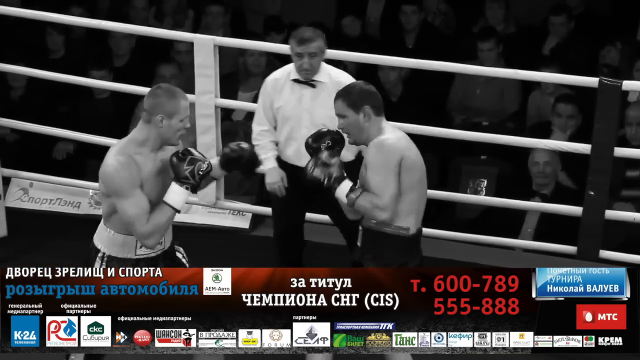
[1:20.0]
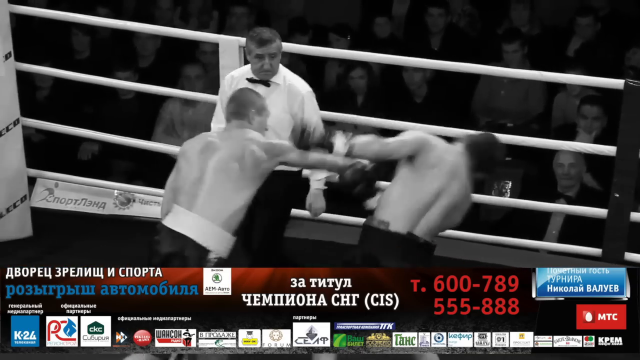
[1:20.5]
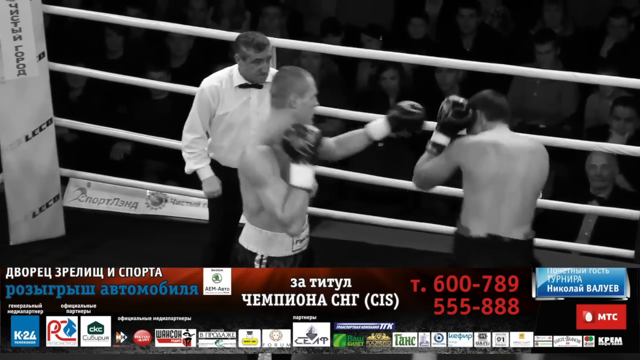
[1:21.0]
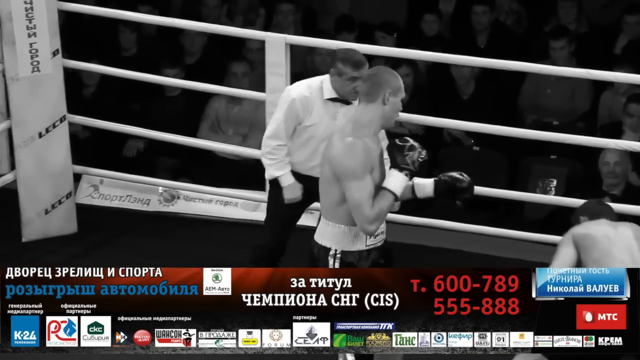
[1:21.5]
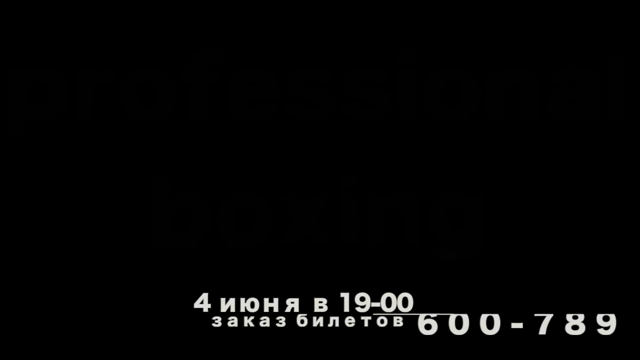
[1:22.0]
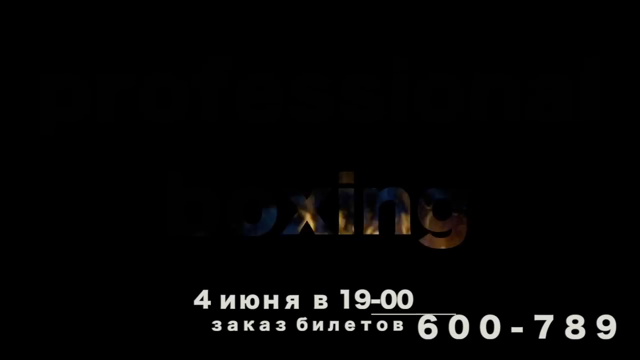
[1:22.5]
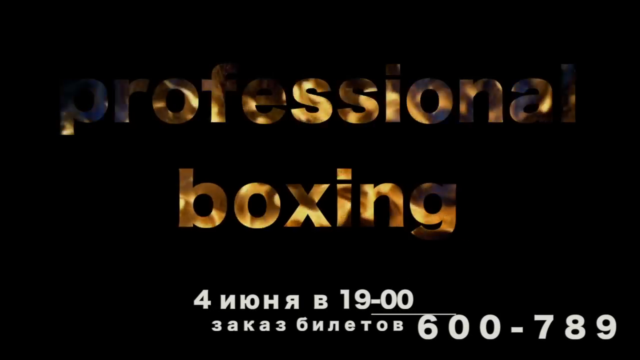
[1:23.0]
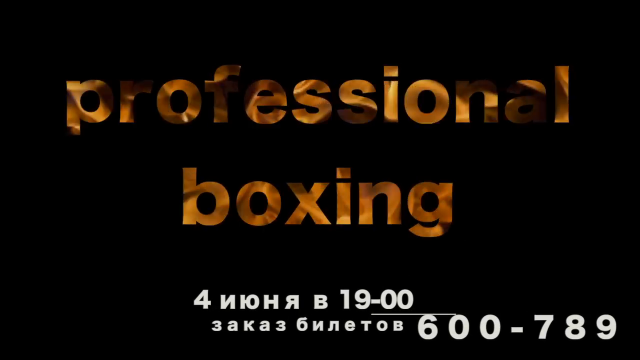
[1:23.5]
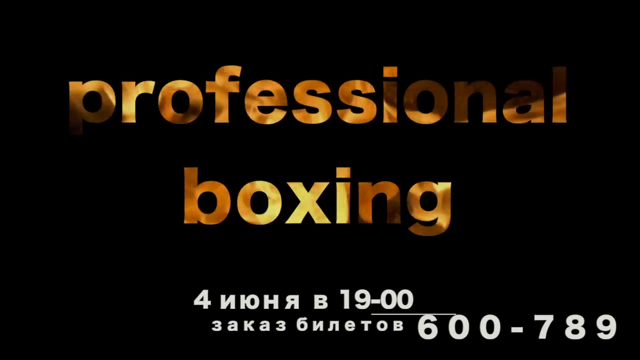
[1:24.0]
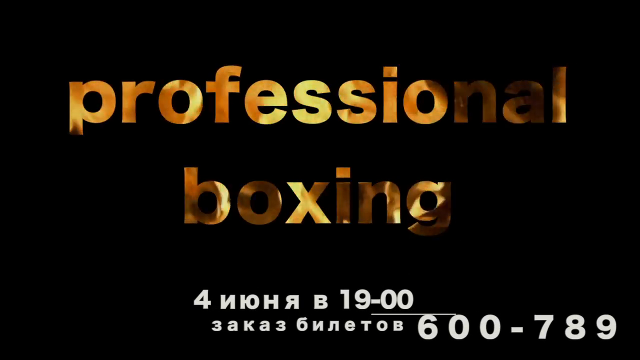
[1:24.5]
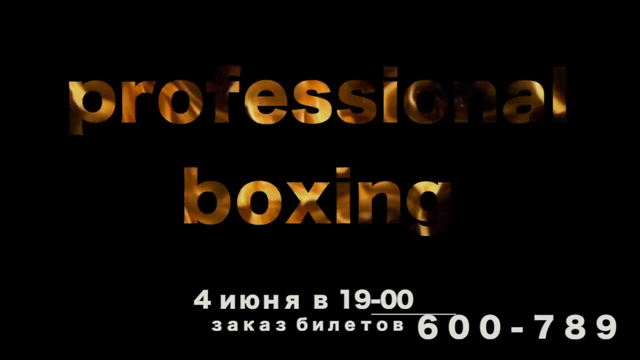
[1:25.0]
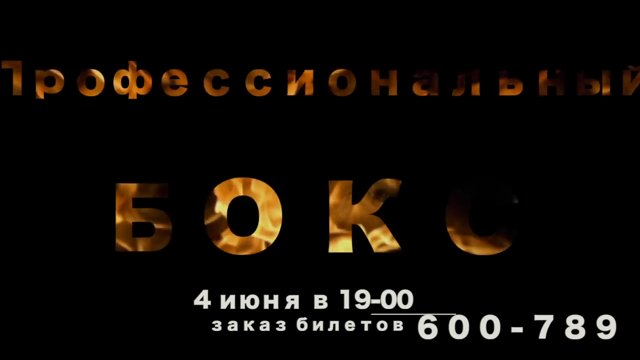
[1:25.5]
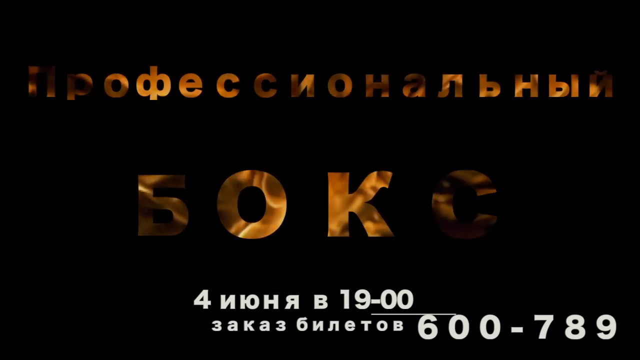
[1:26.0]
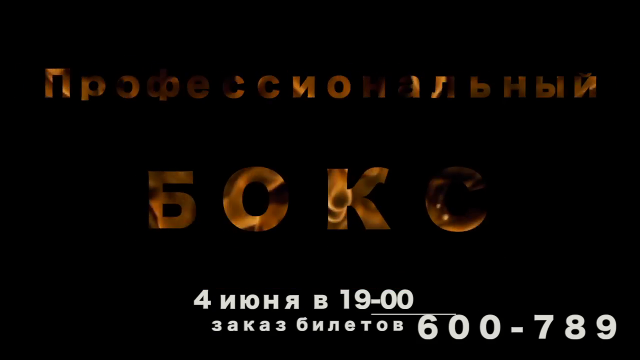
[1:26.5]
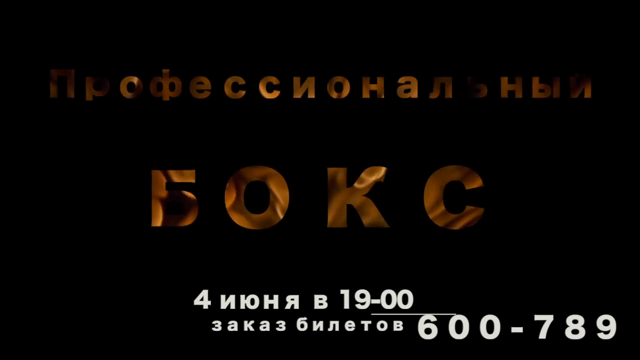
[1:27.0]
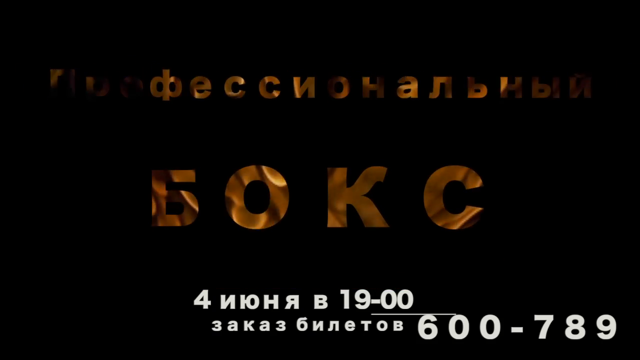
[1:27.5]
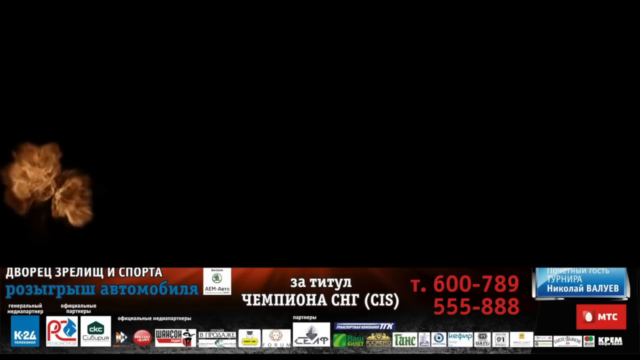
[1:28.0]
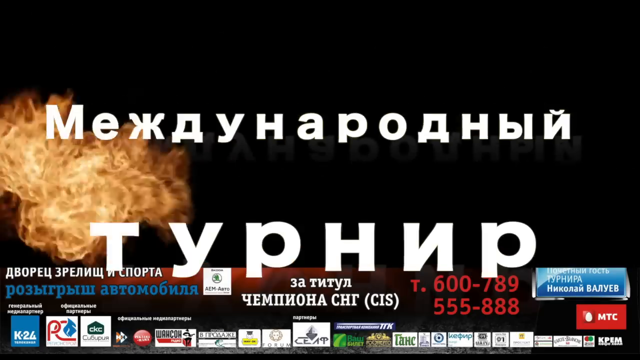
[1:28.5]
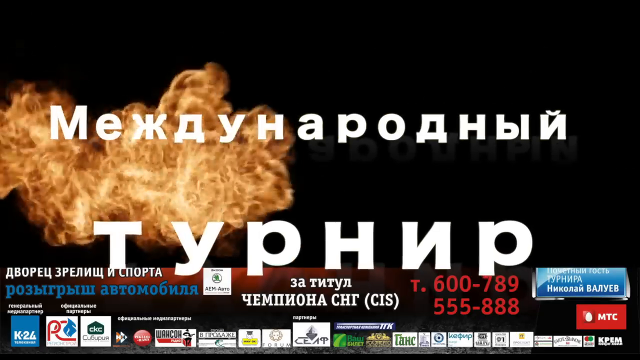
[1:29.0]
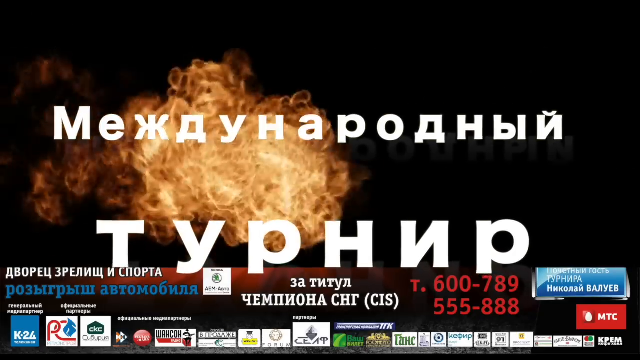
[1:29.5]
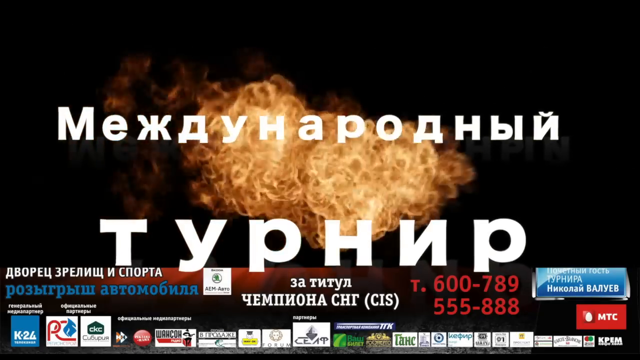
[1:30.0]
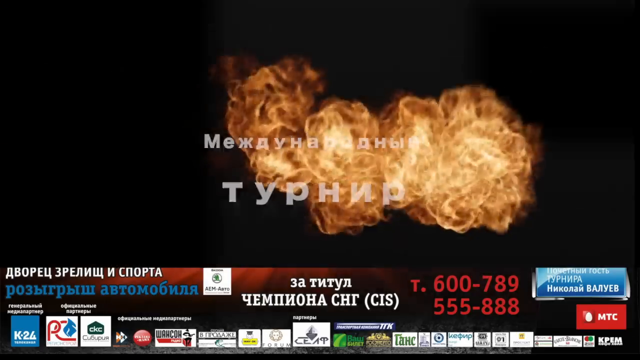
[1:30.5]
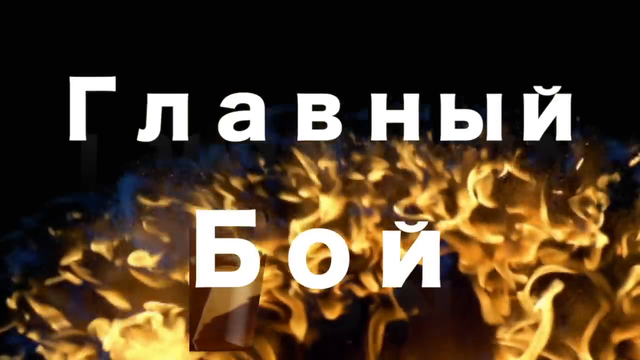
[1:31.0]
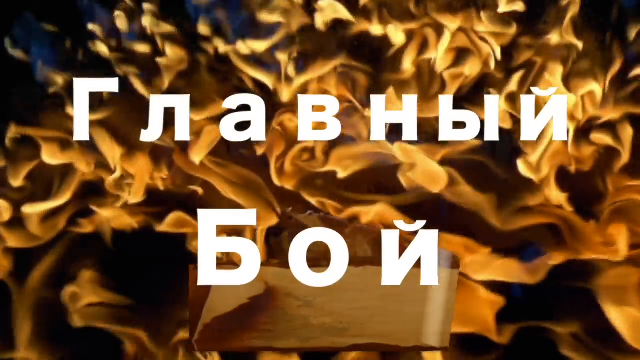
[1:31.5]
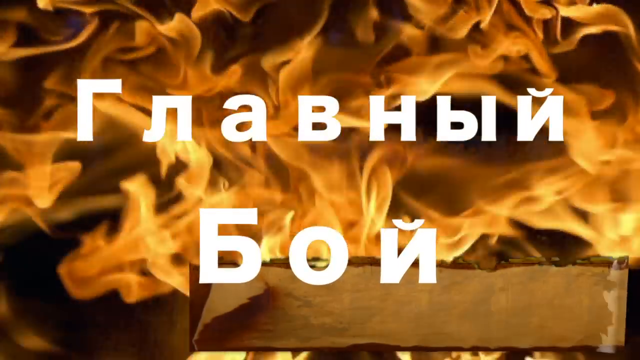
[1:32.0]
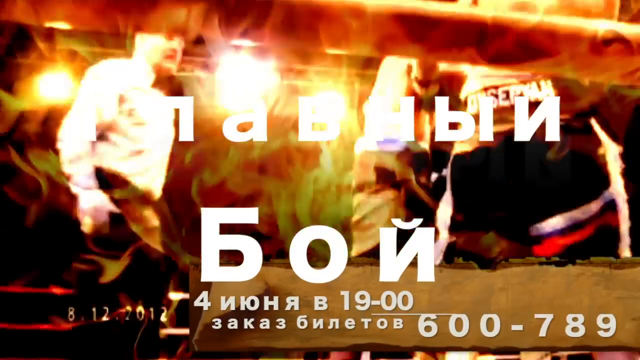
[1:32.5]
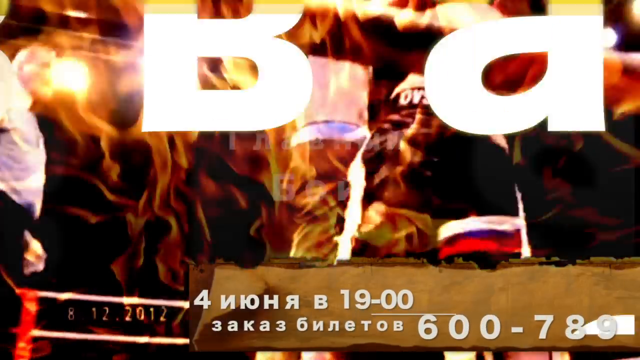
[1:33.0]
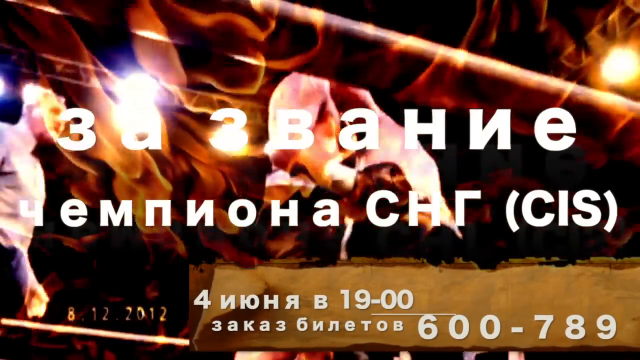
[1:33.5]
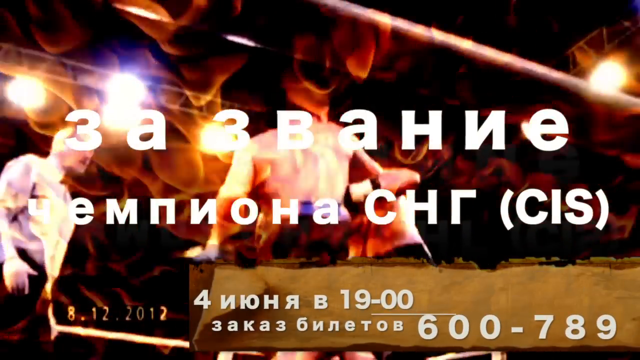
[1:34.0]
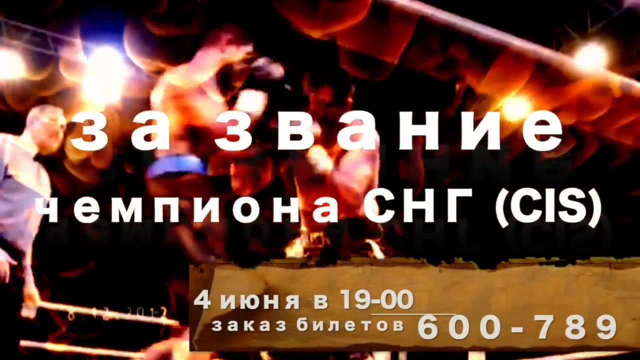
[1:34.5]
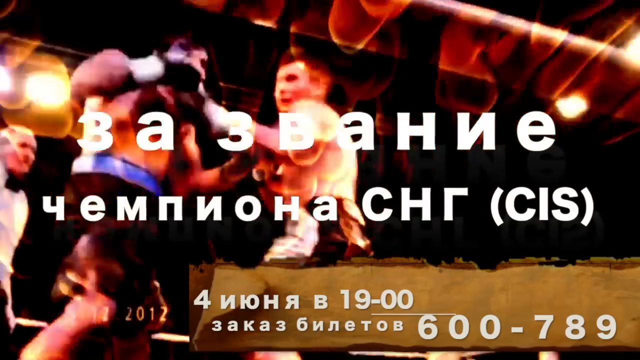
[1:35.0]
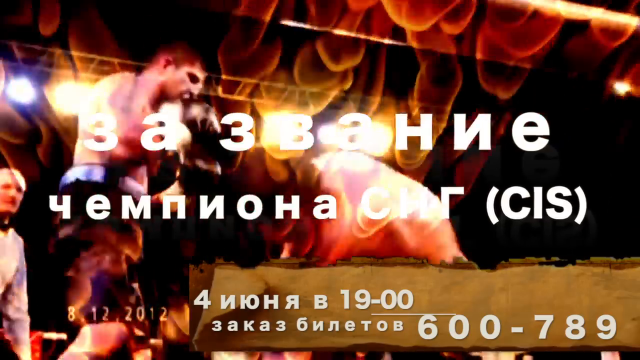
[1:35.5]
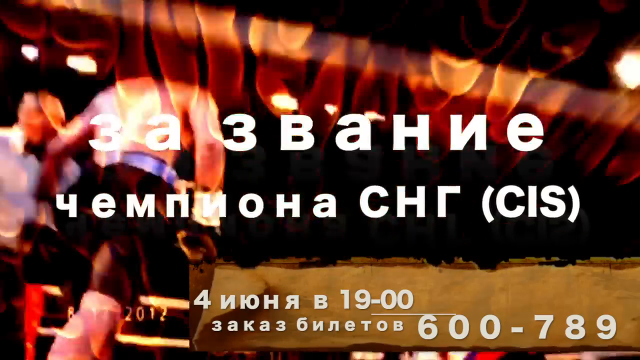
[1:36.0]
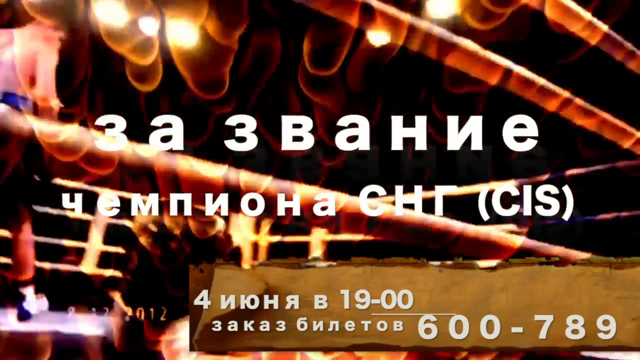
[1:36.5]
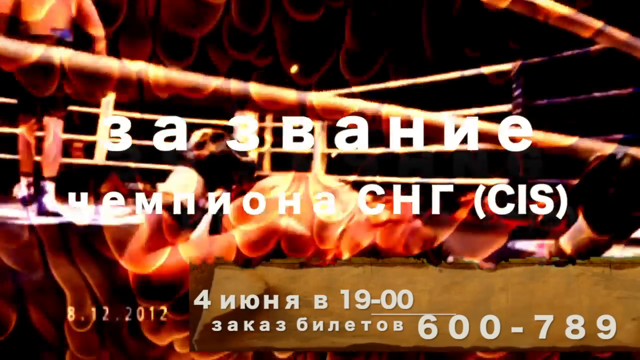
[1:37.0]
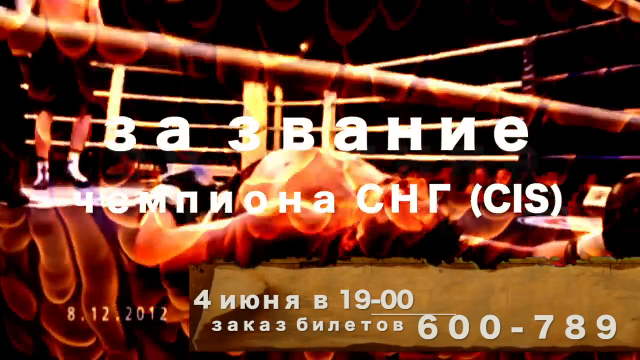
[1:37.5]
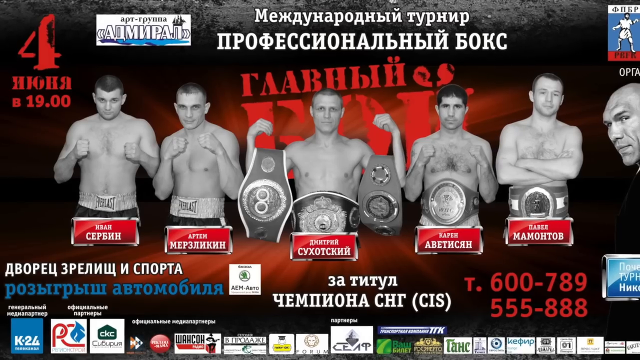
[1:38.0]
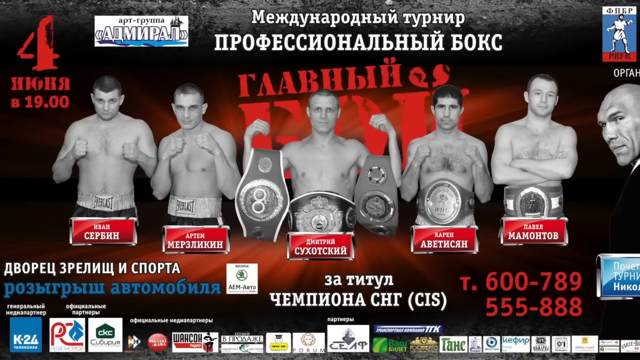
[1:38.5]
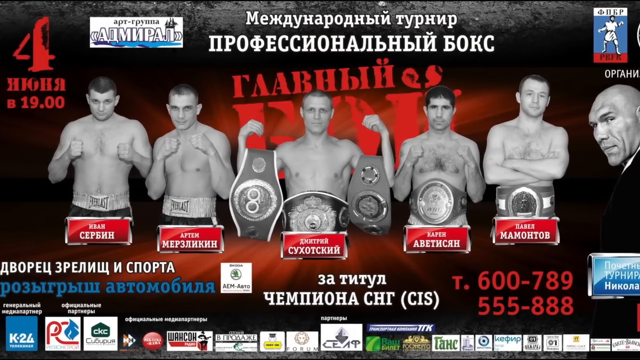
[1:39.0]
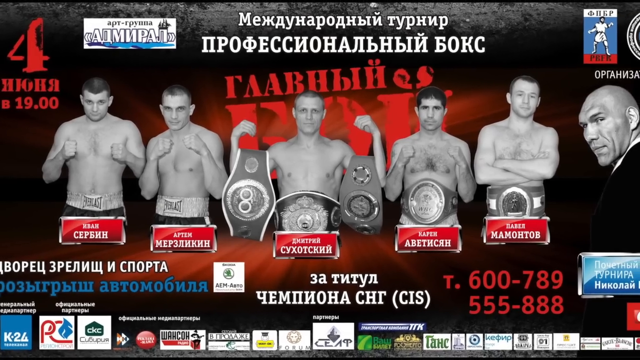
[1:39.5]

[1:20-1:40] A black-and-white video shows a boxing match with two men in the middle and a referee wearing a white shirt and a black bow tie. Audience members fill the top half of the frame, sitting in their chairs and watching. The man on the left throws a punch at the man on the right, who gets knocked down. The scene changes to the words "professional boxing" in a sort of orangish color, with a dynamic fire image kind of moving inside each letter. The text then changes to Russian while keeping the orangish color and fiery image in each letter. Next, white Russian text appears with fire in the background, and then the background features boxers, with a boxer getting knocked down. The scene changes to five boxers, with the bald man seen earlier on the right. The middle boxer holds two belts on his arms and wears a belt, while the last two wear a belt only.